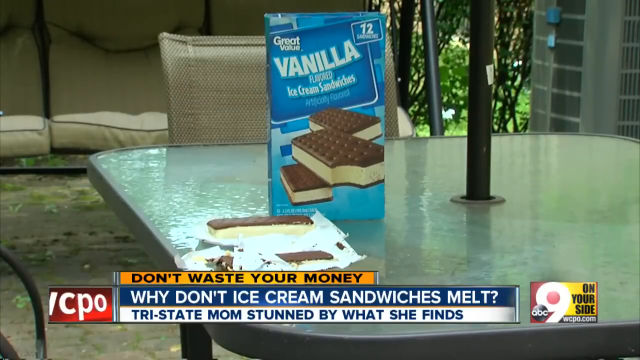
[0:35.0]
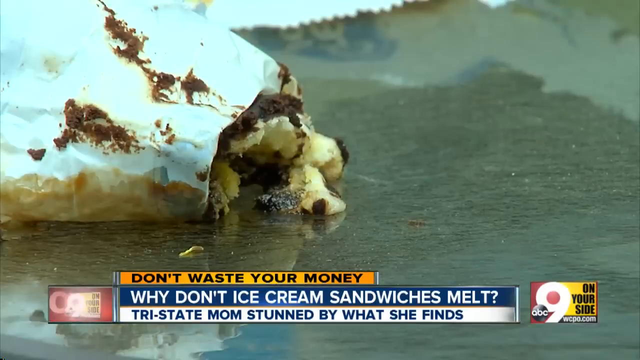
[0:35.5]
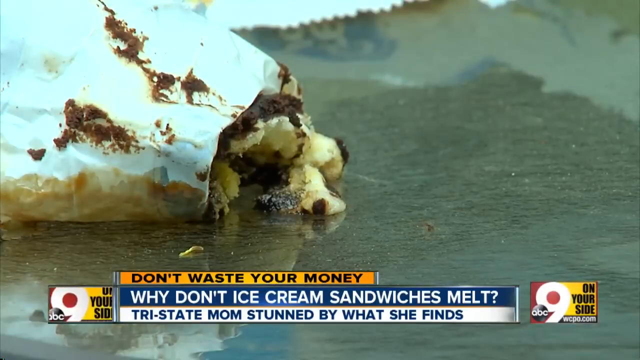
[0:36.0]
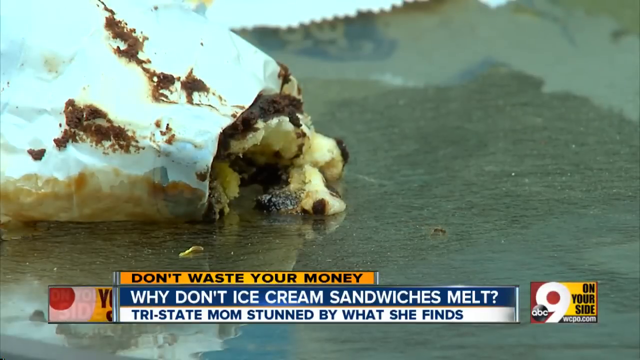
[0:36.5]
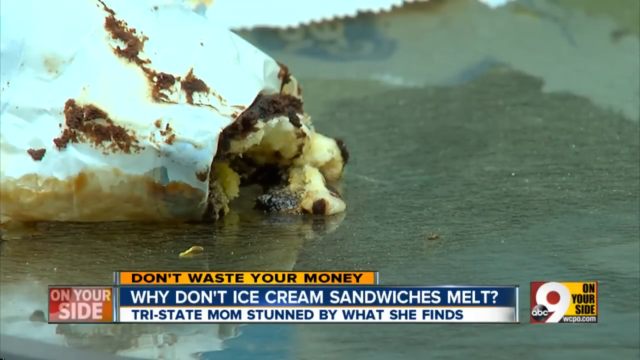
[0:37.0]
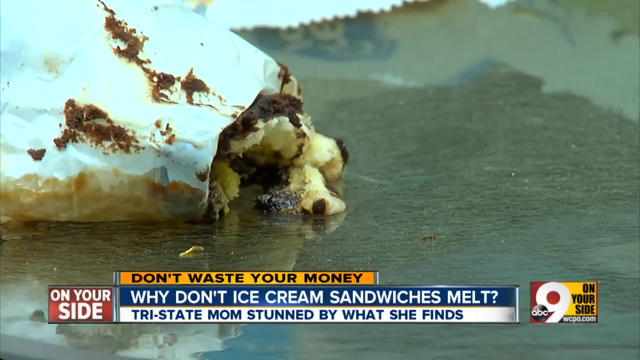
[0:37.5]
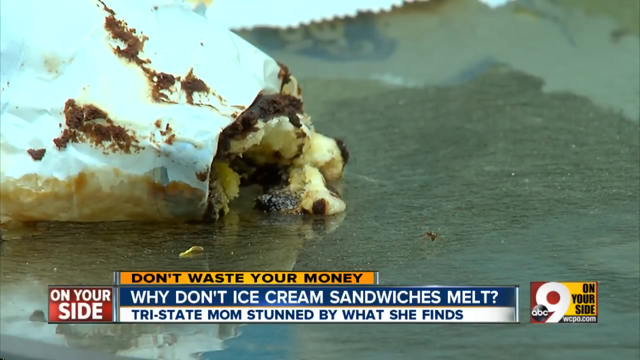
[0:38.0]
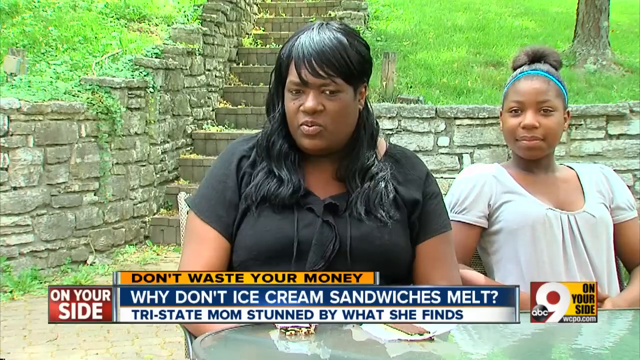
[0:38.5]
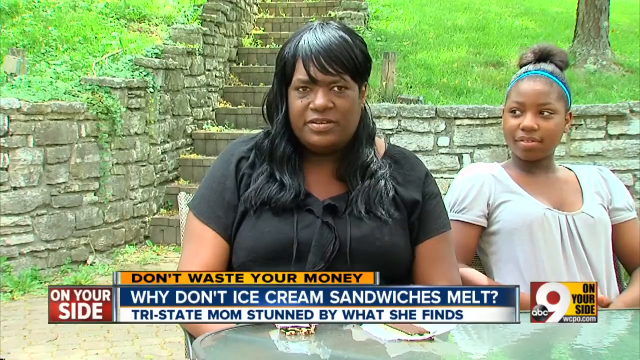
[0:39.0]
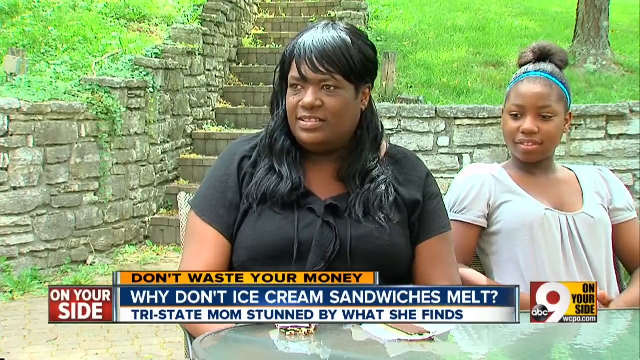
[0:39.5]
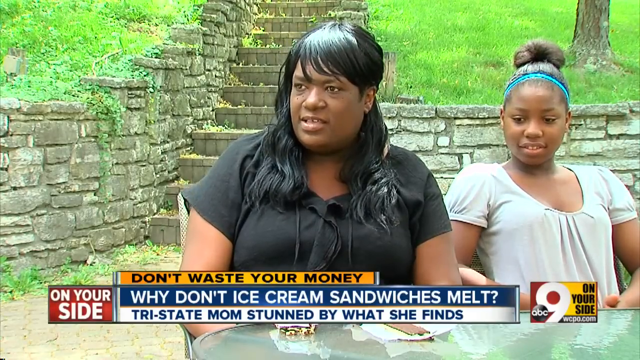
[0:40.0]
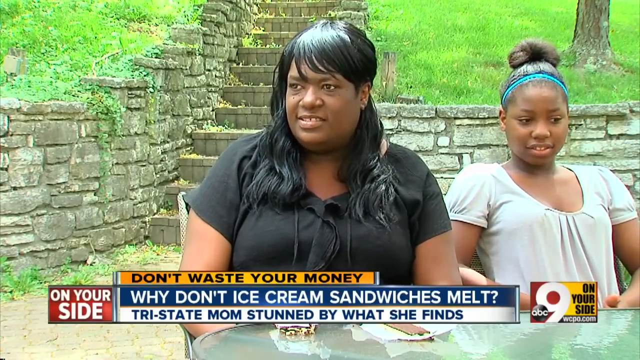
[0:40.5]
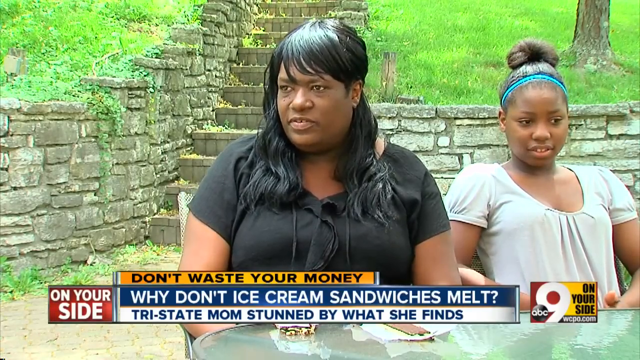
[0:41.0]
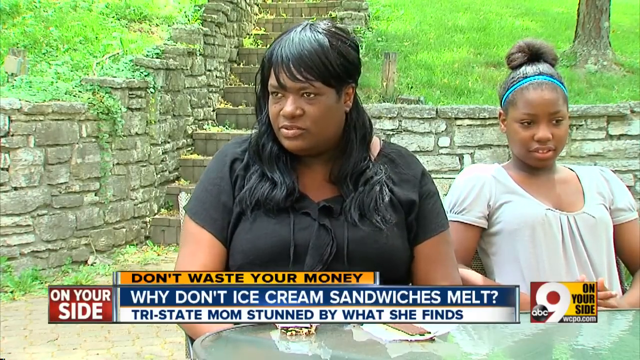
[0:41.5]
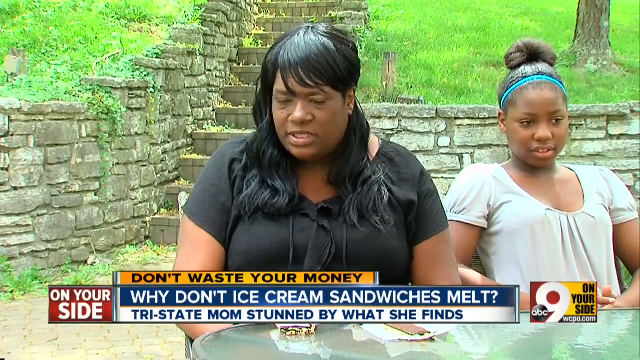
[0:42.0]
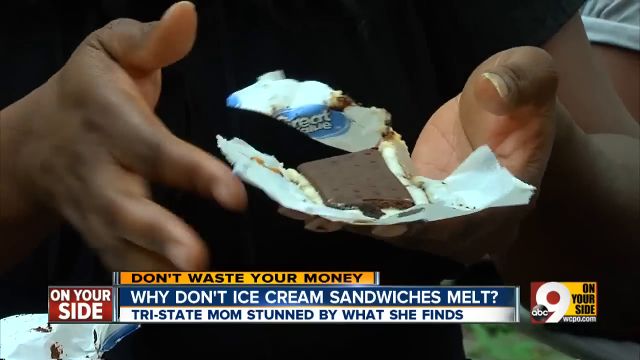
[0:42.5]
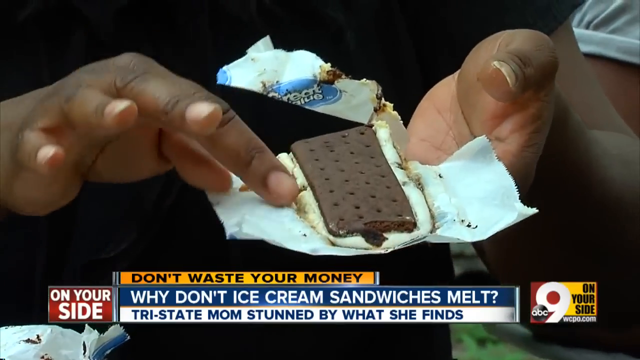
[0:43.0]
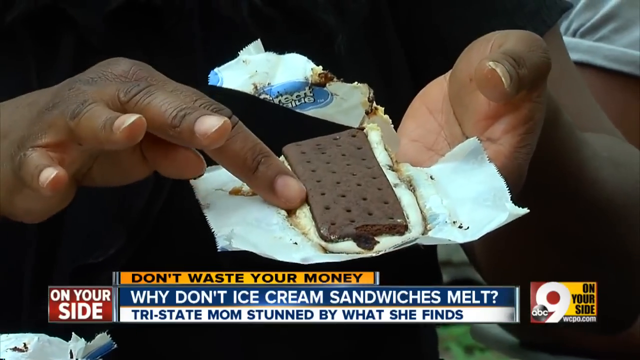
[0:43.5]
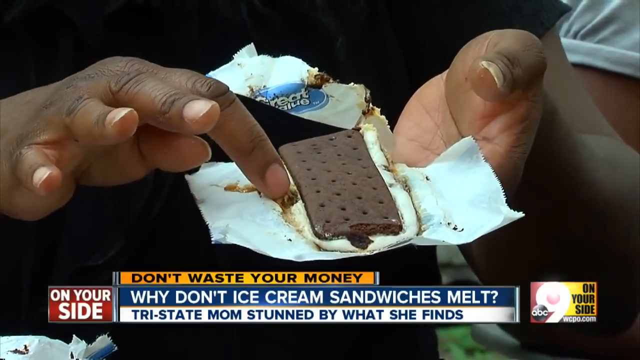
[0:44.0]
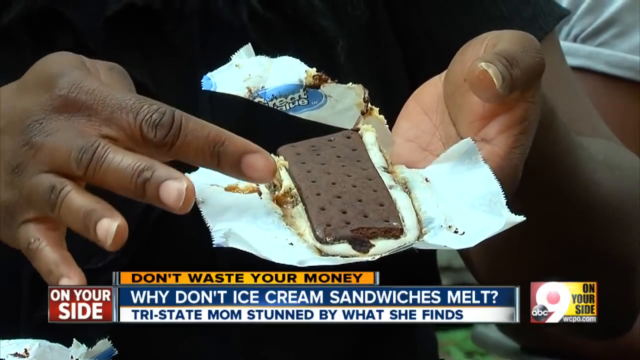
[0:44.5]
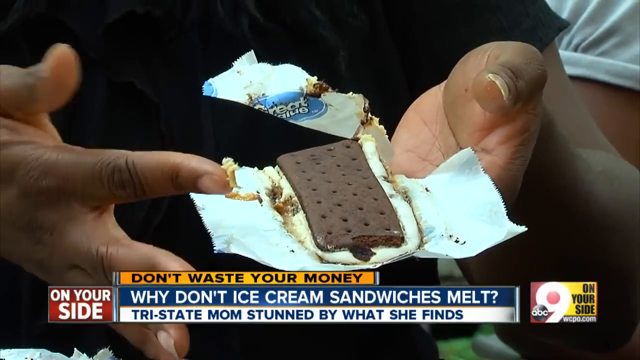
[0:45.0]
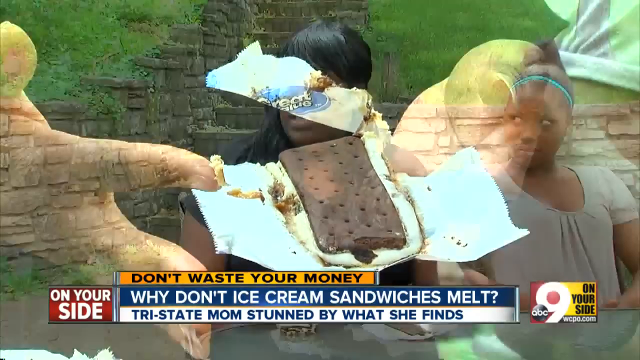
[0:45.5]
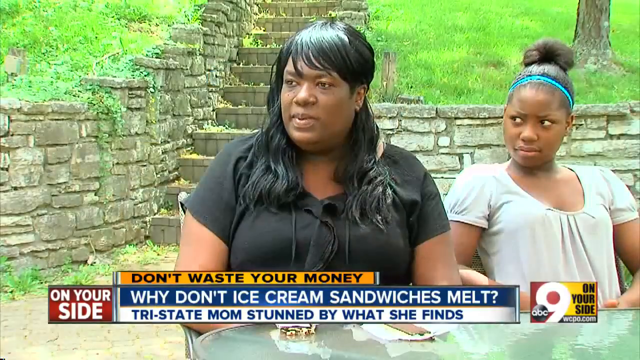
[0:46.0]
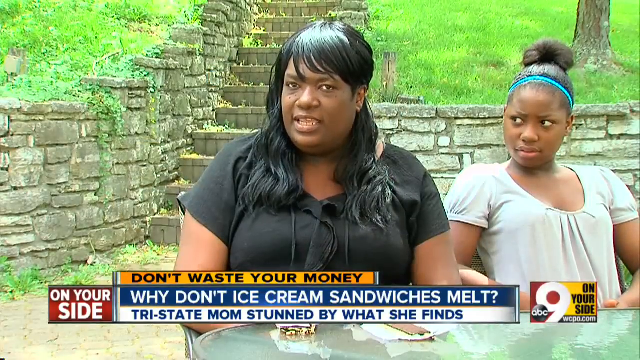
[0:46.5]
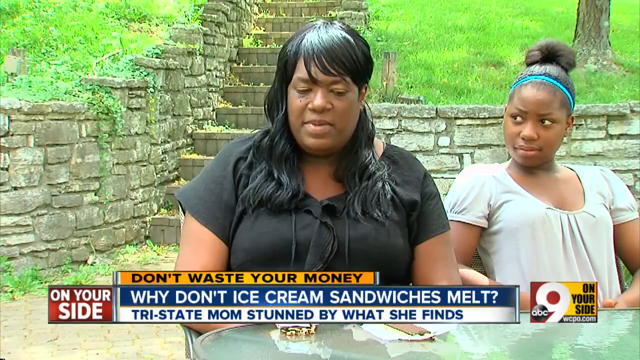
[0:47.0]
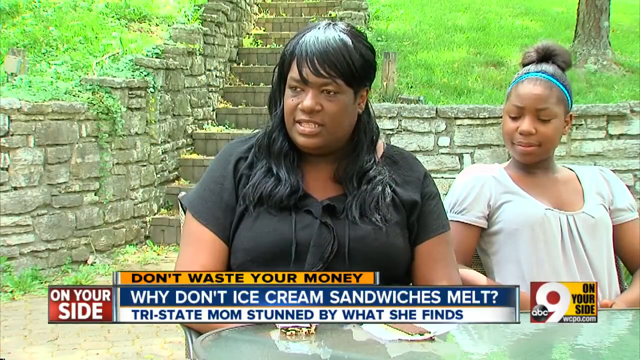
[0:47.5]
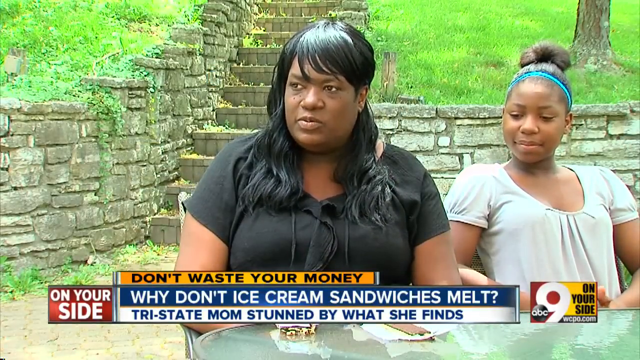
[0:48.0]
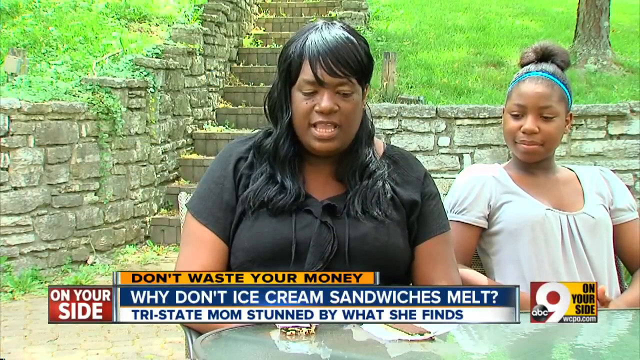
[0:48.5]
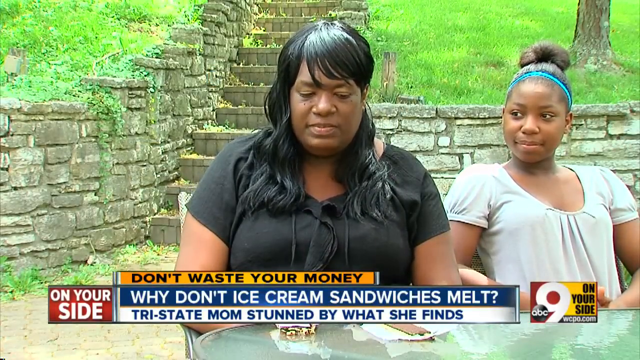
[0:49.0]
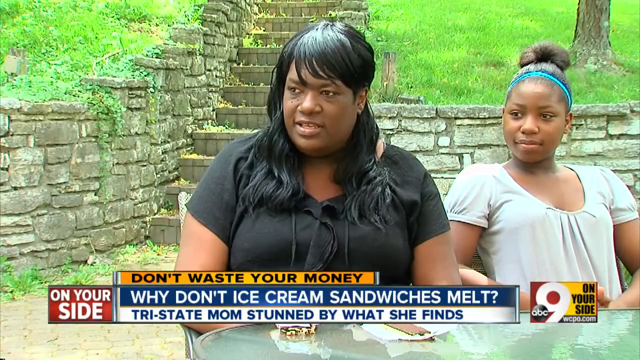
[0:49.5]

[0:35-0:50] In what looks like a news program, a smashed ice cream sandwich lies on a silver metal surface. The video cuts to an African American woman and an African American girl sitting on a park bench being interviewed by the news, in a park-like environment with gray stairs behind them. It then cuts to a picture of an ice cream sandwich opened inside its wrapper; they point at it, and the woman appears to put her finger on the ice cream part. The ice cream sandwiches shown are the typical kind, with white vanilla ice cream and a chocolate cracker on top. A graphic at the bottom reads "don't waste your money. Why don't ice cream sandwiches melt? Tri-state moms stunned by what she finds." On the left another graphic reads "on your side," and on the right one reads "ABC 9."